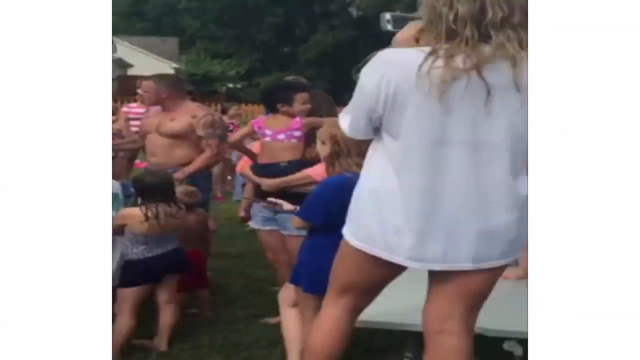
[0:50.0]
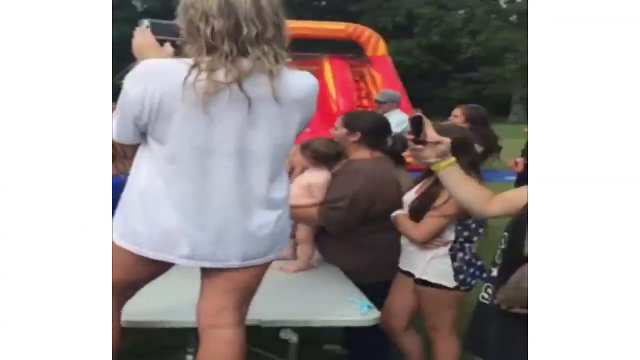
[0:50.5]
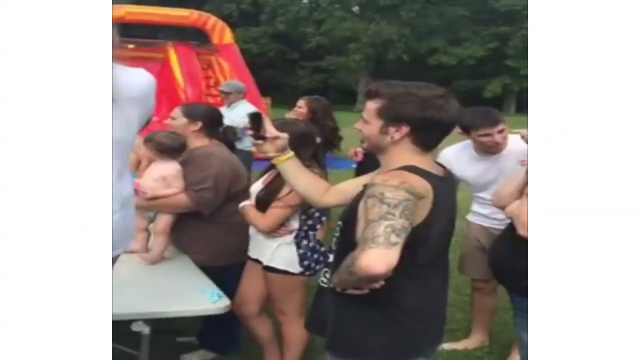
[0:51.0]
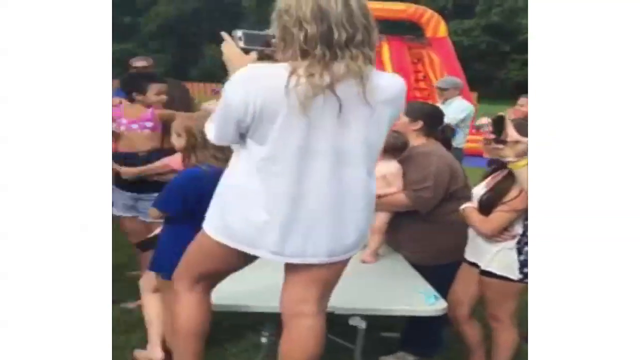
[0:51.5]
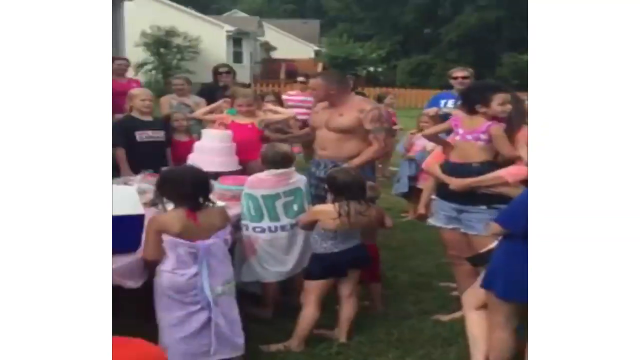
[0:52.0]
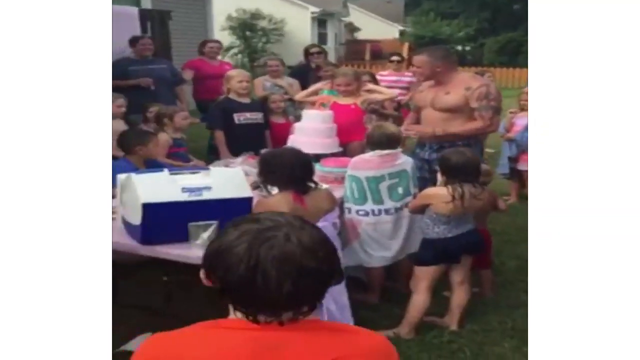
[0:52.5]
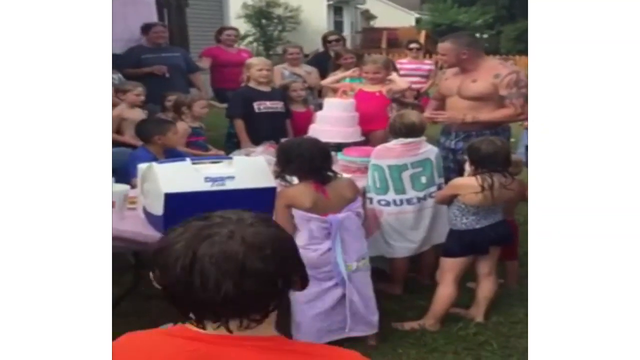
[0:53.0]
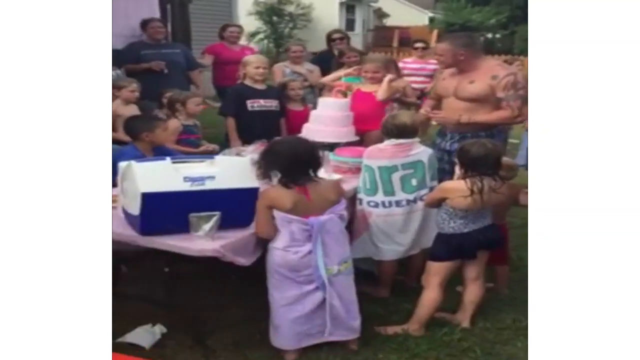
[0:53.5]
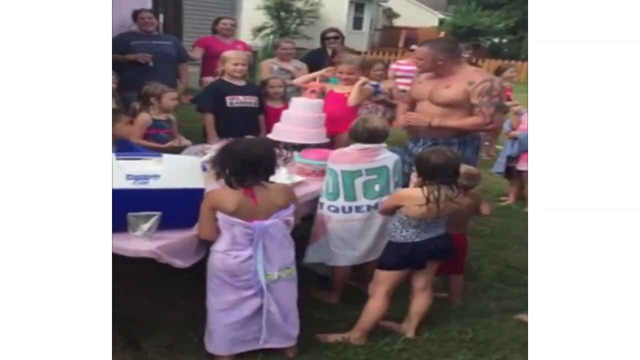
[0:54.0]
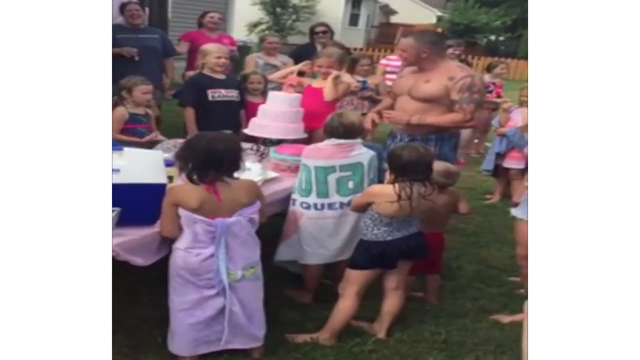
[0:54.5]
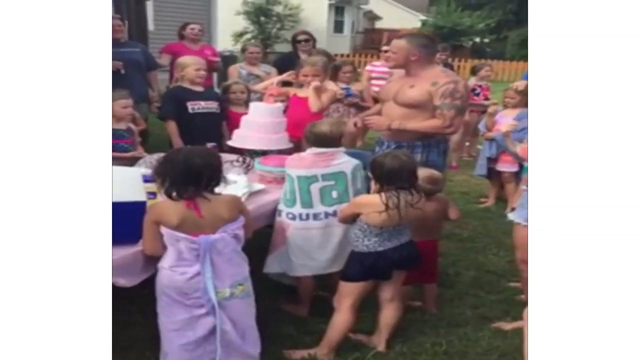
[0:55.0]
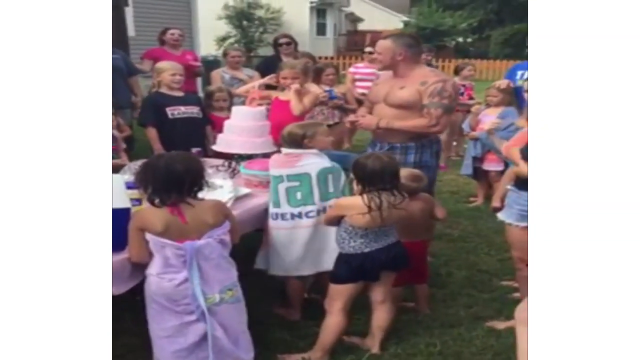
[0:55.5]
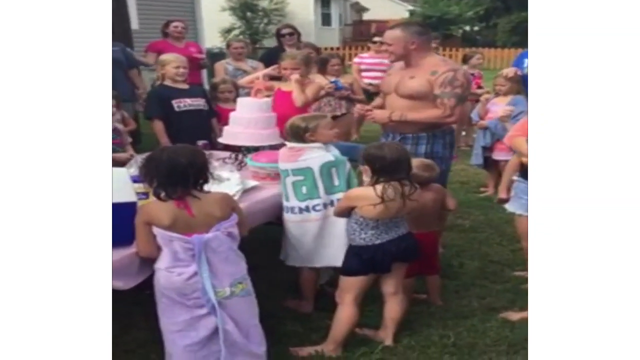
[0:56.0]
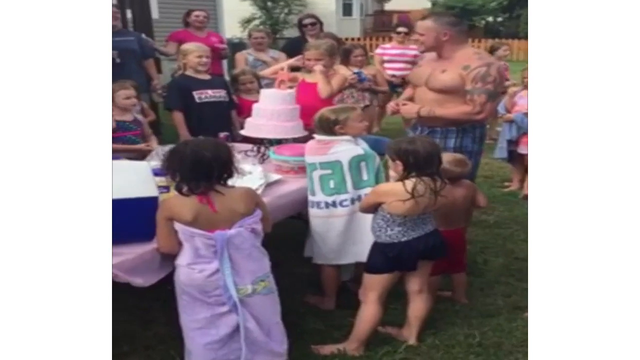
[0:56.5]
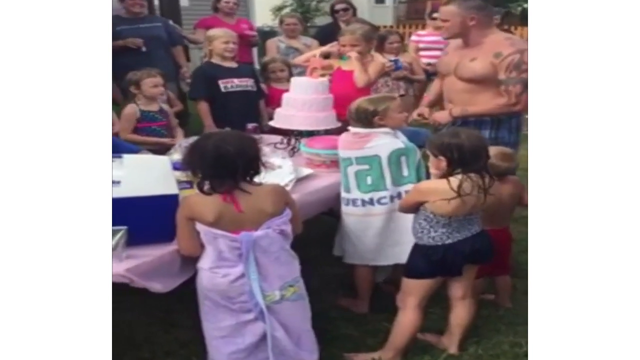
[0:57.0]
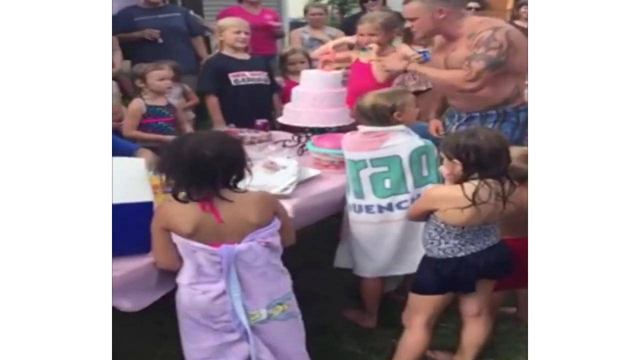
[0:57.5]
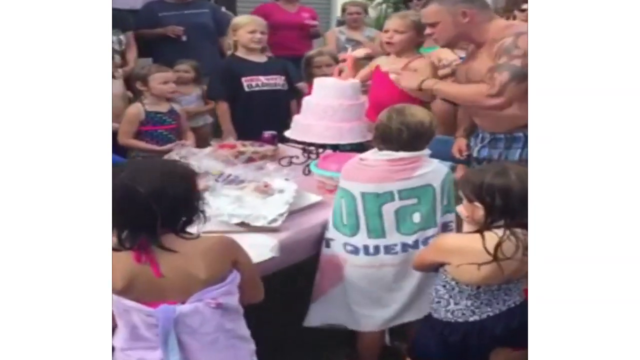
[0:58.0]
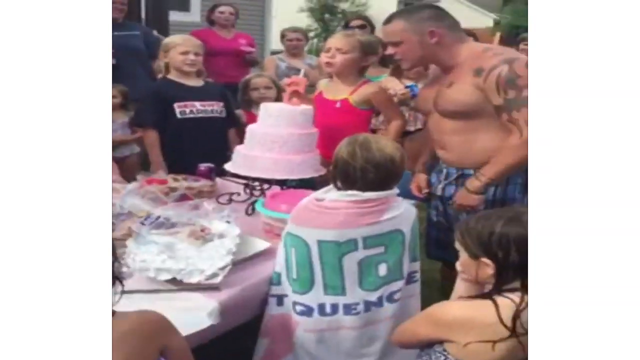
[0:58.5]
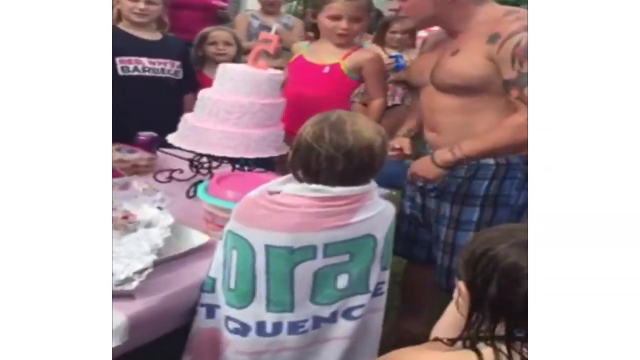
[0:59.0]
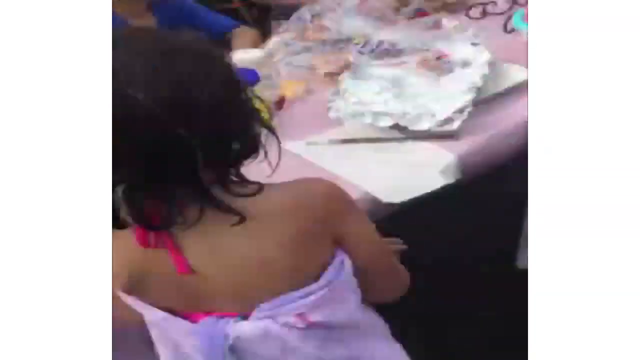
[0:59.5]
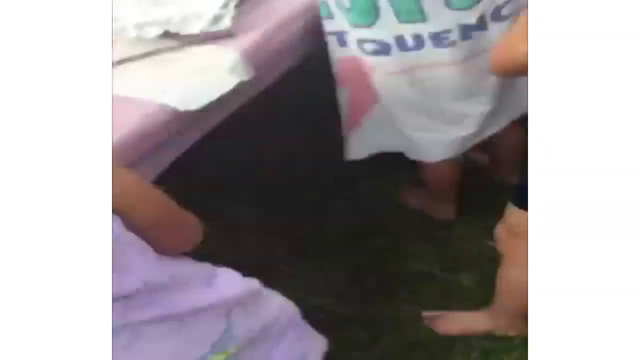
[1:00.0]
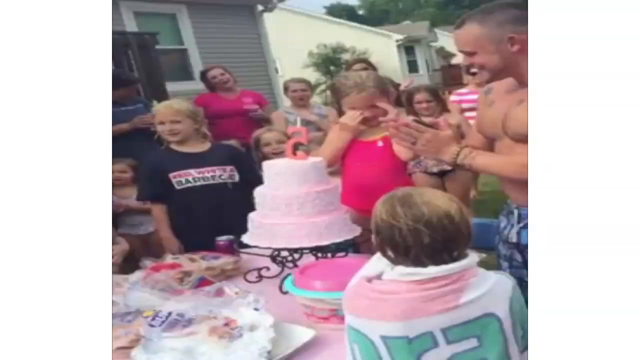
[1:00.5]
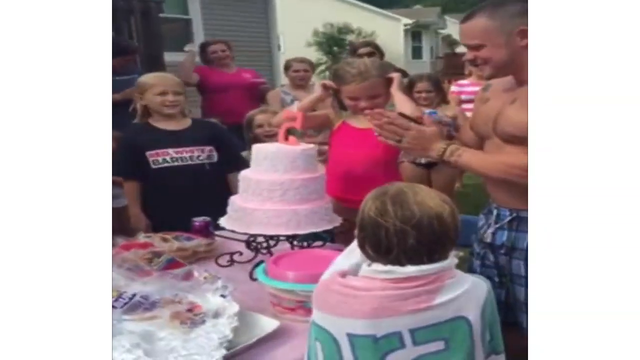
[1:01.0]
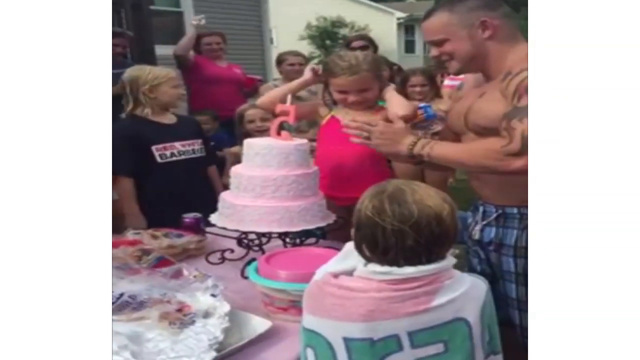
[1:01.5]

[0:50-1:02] A woman is where the cake is. Small footprints are visible around the table, and there is a banana plantation at the back of the house. The woman serving everything appears to be in awe and surprise. The page pops up on the screen again with the words "does anyone have kids". A maroon and yellow water jumper is on the lawn. The video then transitions back to the party, where people and small children can be seen. At the end, a woman peeps through the camera. The party has a pink color theme, which most of the people at the birthday party are wearing.